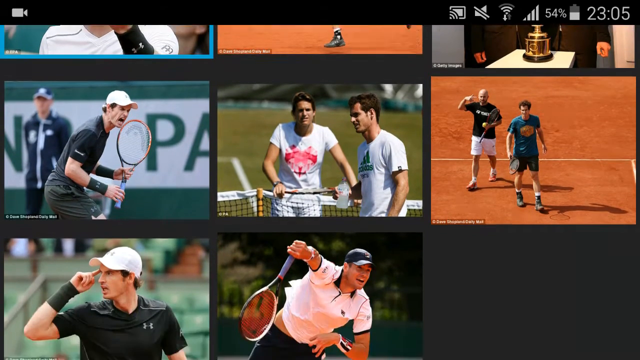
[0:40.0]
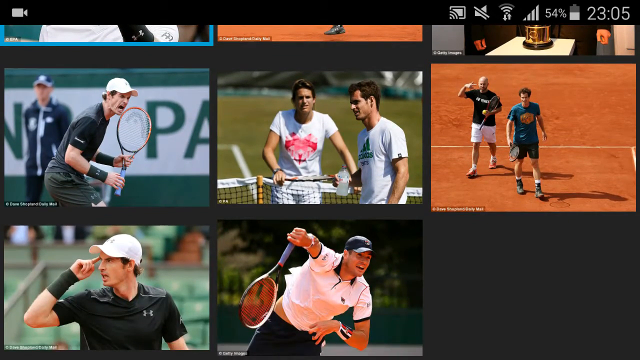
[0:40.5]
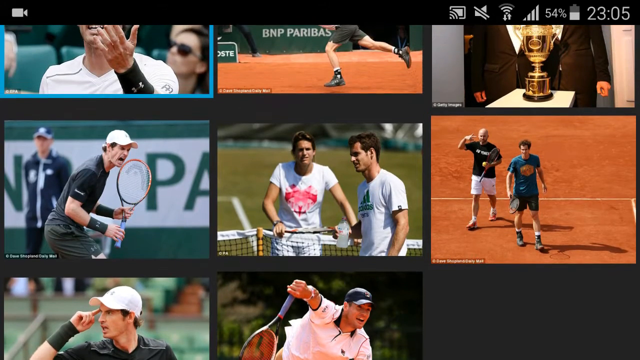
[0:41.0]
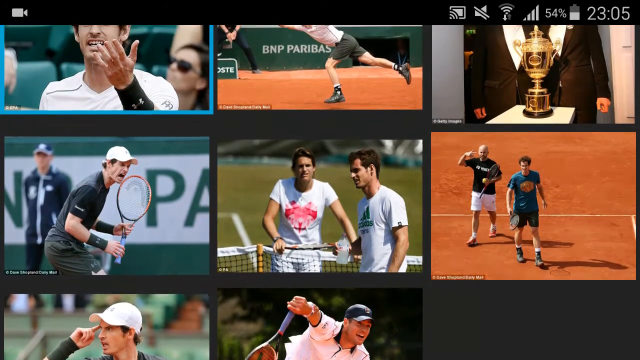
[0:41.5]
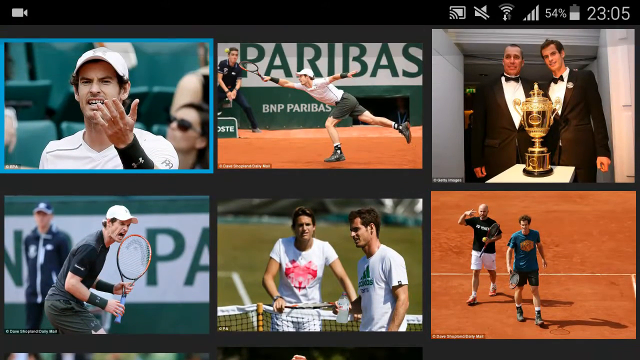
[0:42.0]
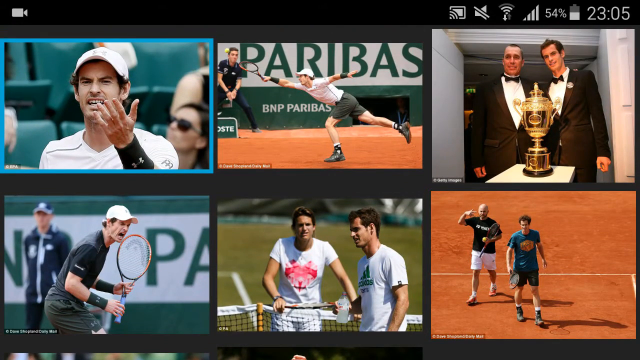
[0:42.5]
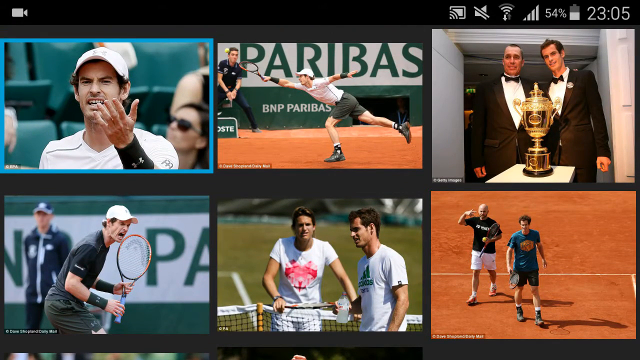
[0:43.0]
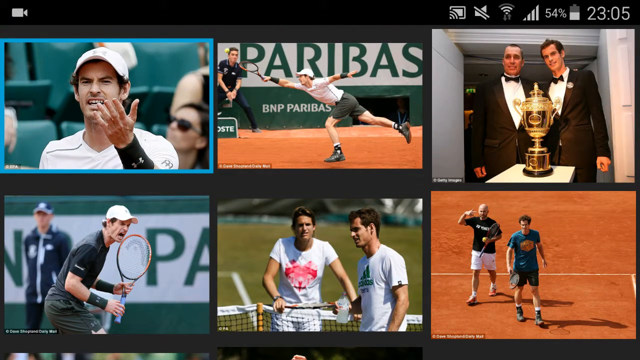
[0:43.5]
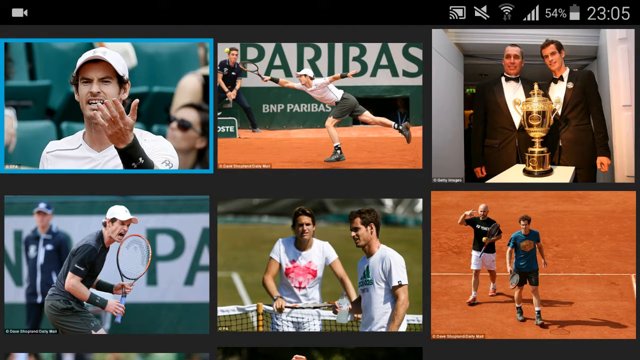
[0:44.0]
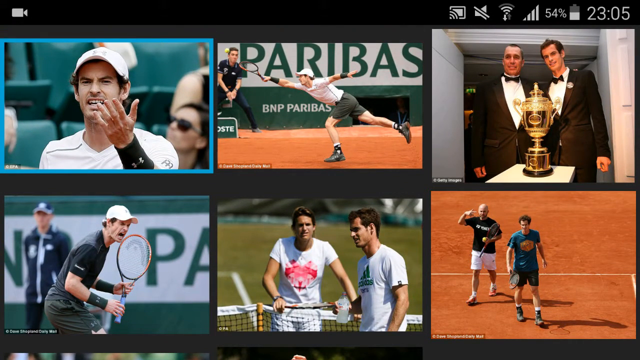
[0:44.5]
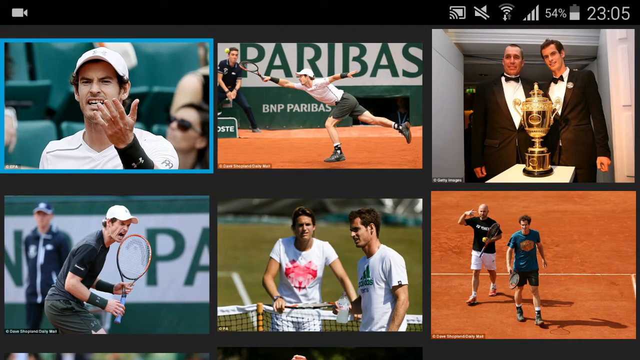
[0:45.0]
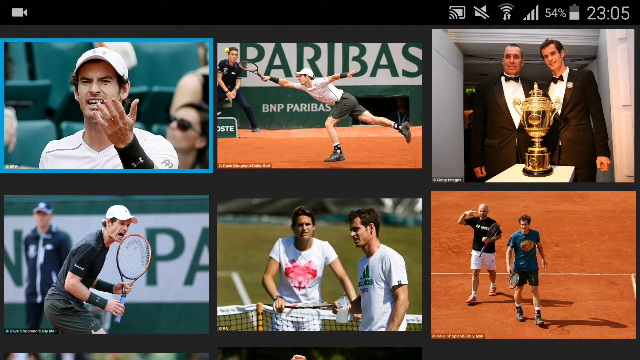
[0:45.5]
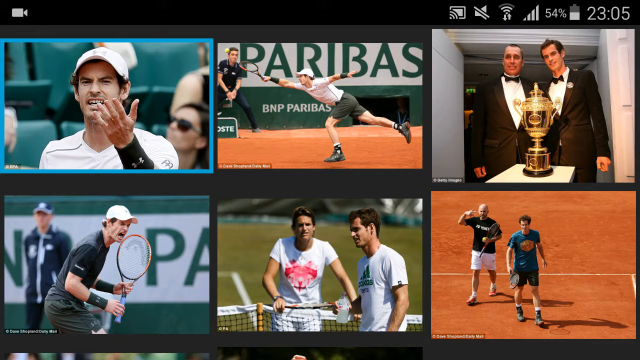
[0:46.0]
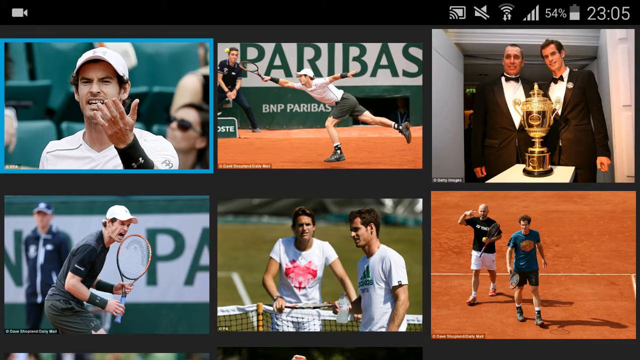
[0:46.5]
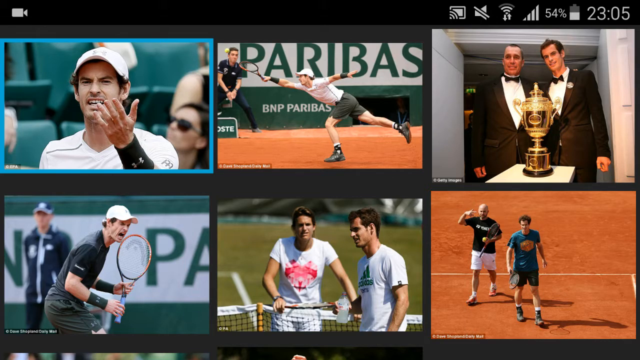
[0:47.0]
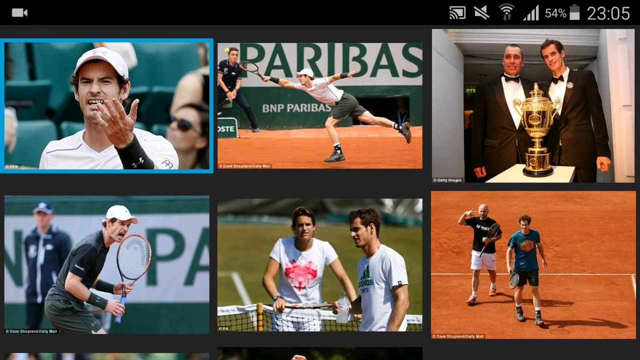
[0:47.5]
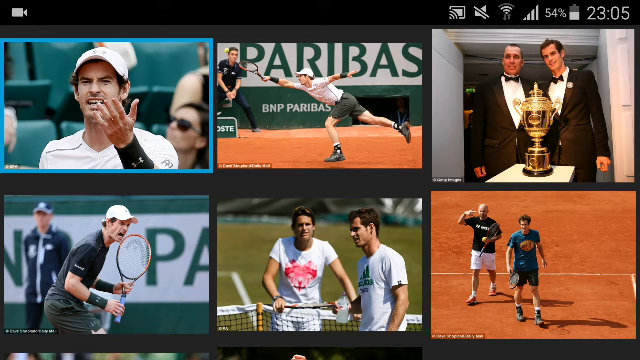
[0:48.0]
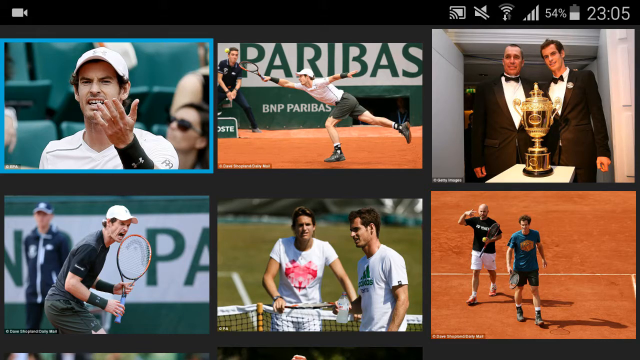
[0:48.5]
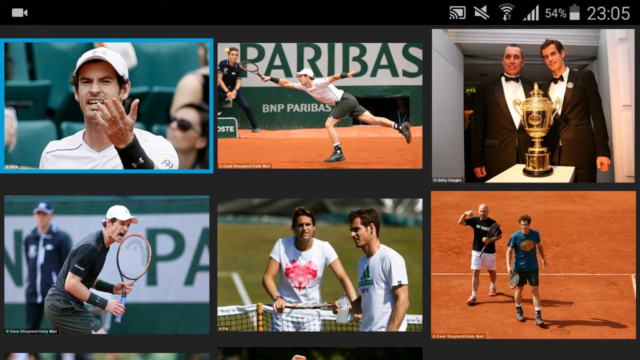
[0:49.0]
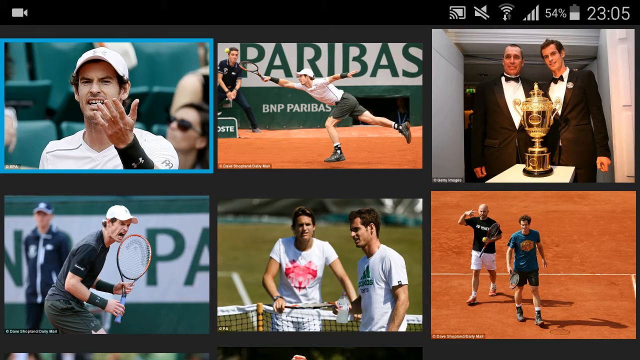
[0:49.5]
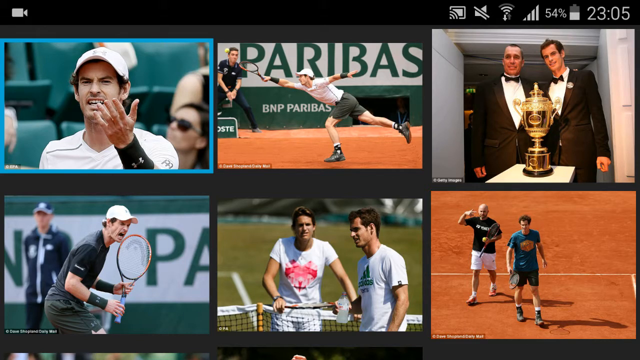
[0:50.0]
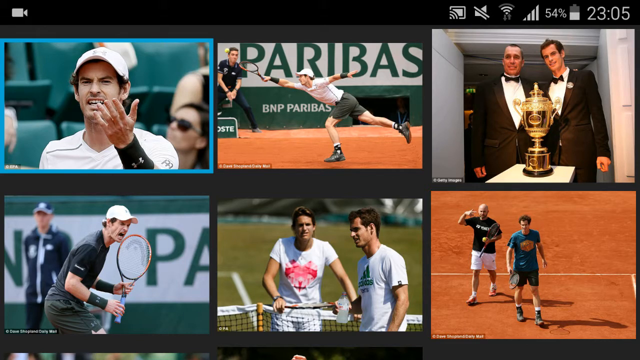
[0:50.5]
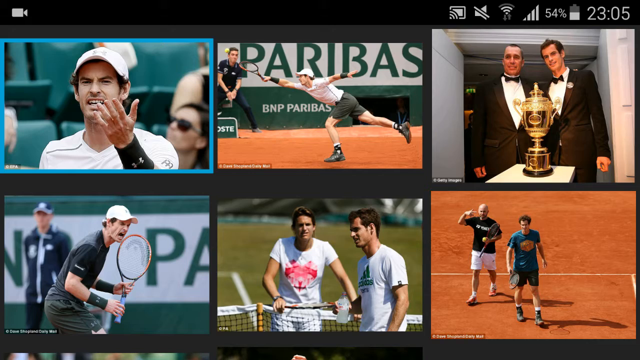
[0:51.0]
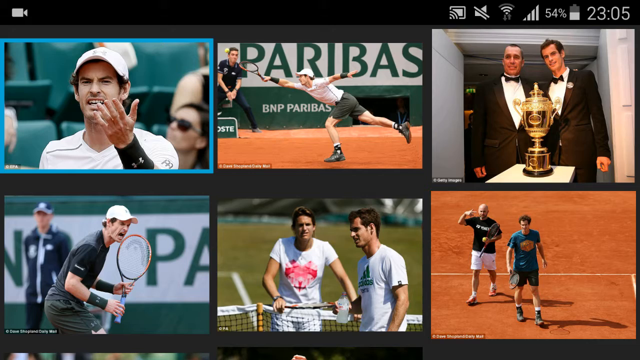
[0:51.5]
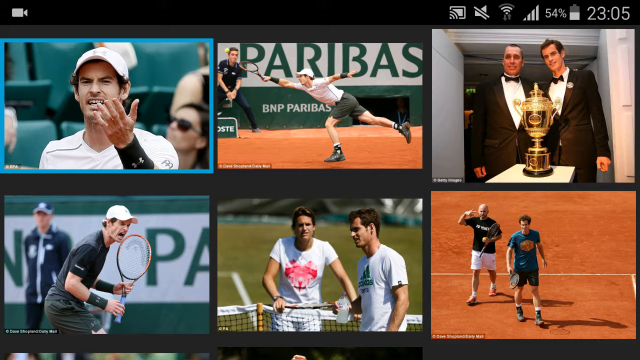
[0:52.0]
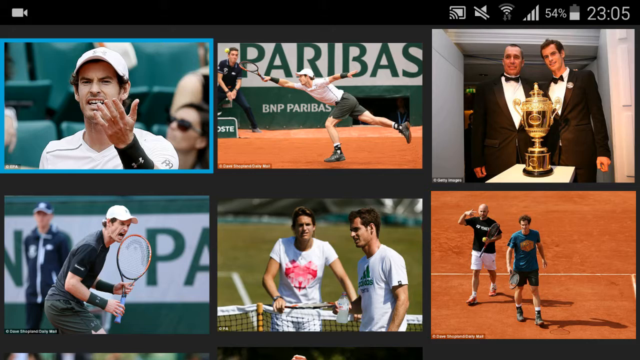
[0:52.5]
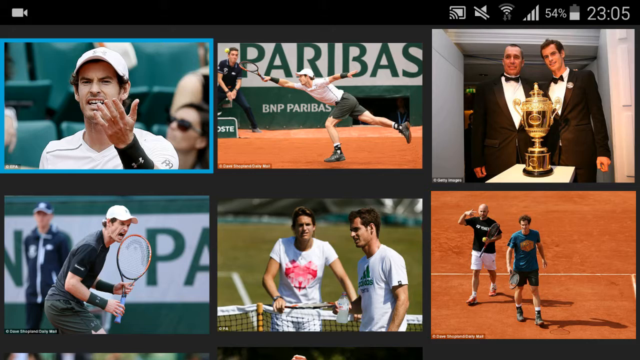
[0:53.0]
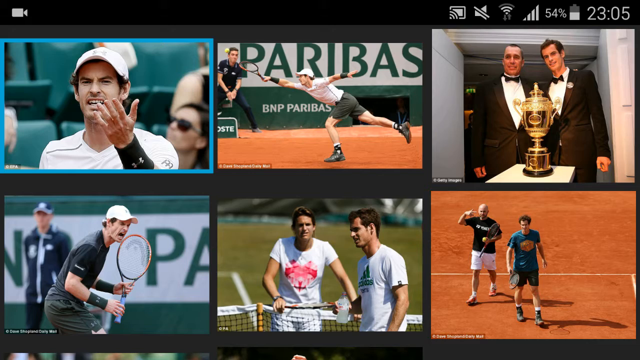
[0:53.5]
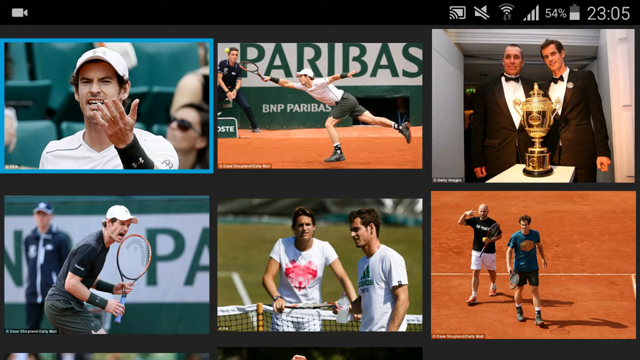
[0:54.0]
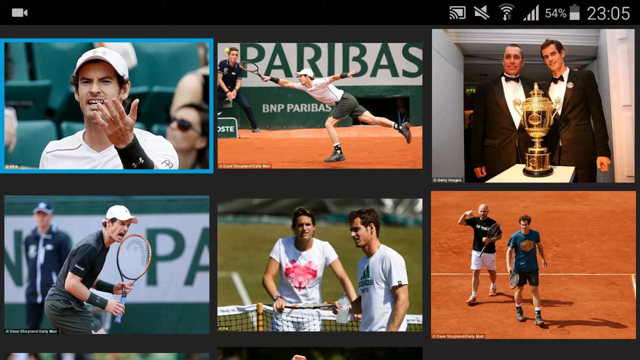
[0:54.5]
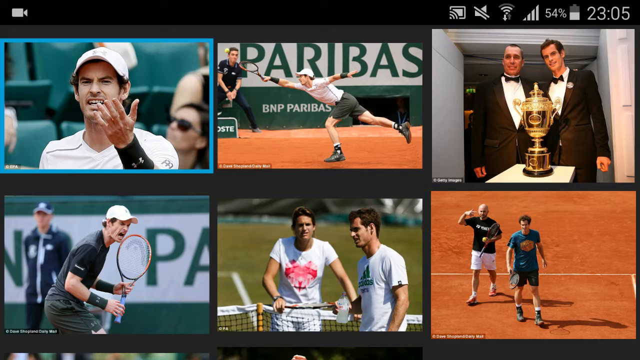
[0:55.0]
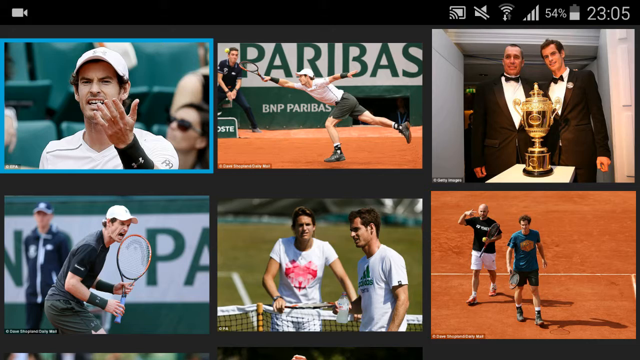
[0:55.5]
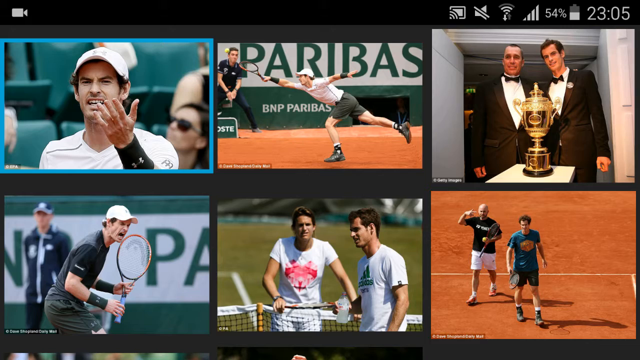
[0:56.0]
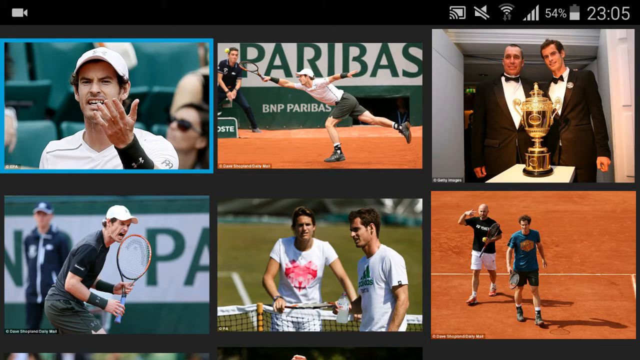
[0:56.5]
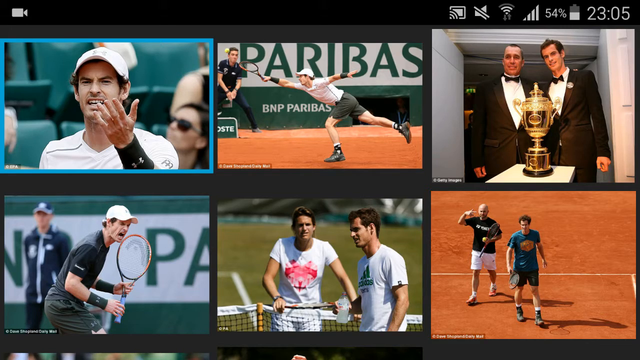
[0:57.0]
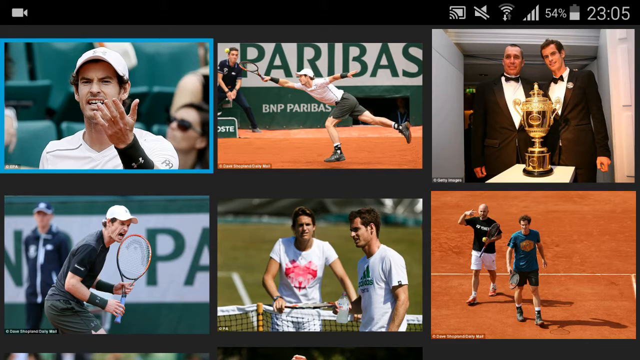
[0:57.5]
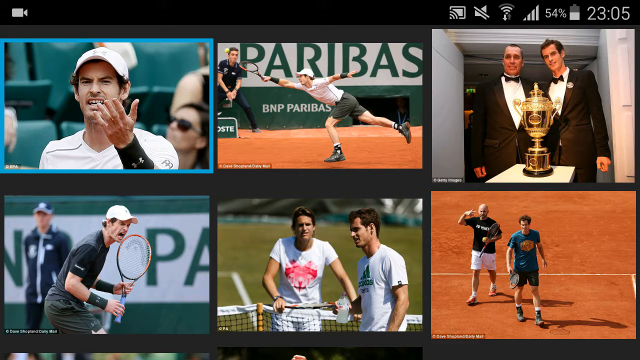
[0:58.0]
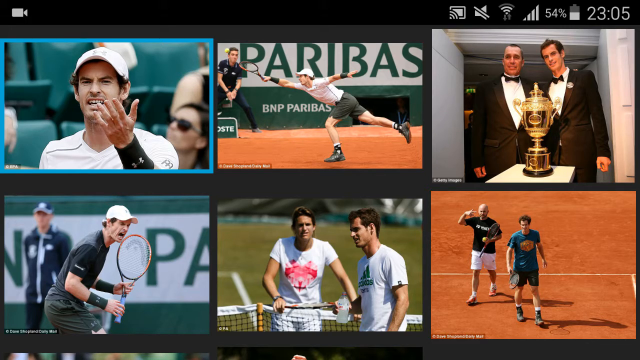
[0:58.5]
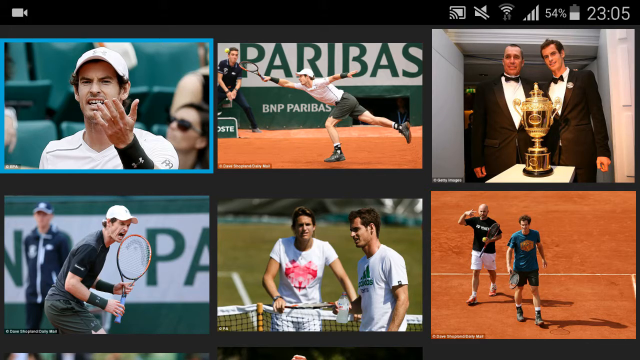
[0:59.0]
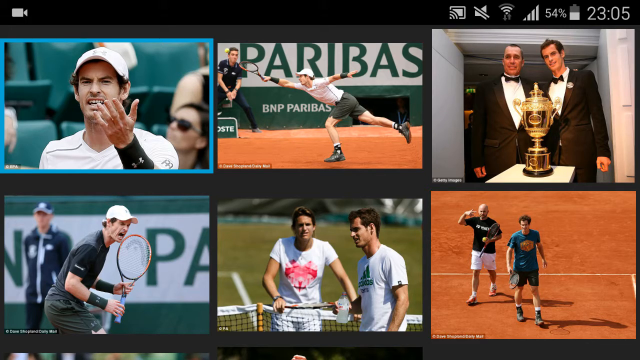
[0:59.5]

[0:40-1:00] On a mobile phone or mobile device, someone looks at an online newspaper article about Andy Murray. A photo is clicked, opening a collage of photos of Andy Murray. Five are visible on the screen as the view scrolls up and down; scrolling up again shows six photos of Murray playing or training at tennis. Top left, he is sitting down in a white hat and white shirt, sort of arguing a point. To the right of that, he is outstretched at Roland Garros, going for the ball. To the right of that, he and Ivan Lendl, in a tuxedo, are in a doorway with a championship trophy in front of him. Bottom left, he is celebrating winning a point. To the right of that, he and another person are on either side of the net, both wearing white t-shirts, on what looks like a grass court. To the right of that, Andy Murray is on a clay court with a man in a black shirt with a shaved head to his left; they appear to be playing doubles.